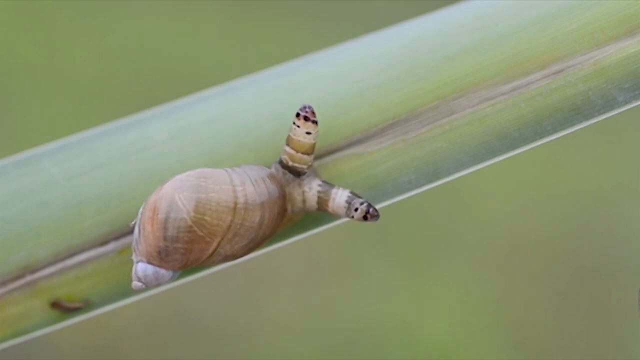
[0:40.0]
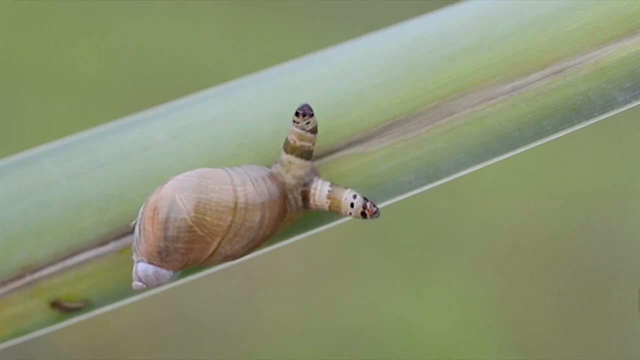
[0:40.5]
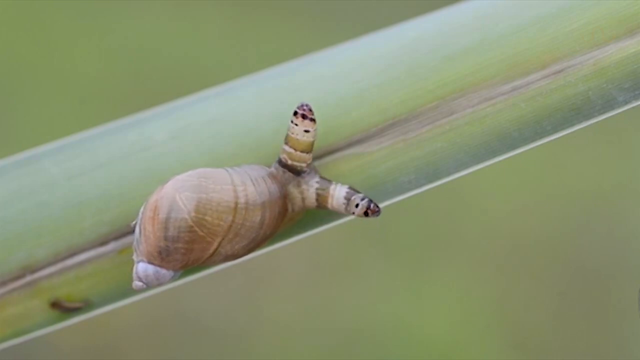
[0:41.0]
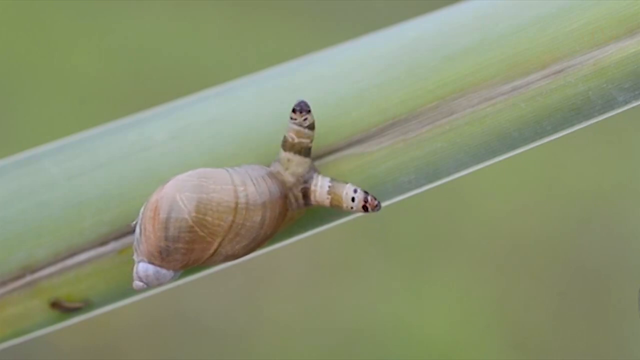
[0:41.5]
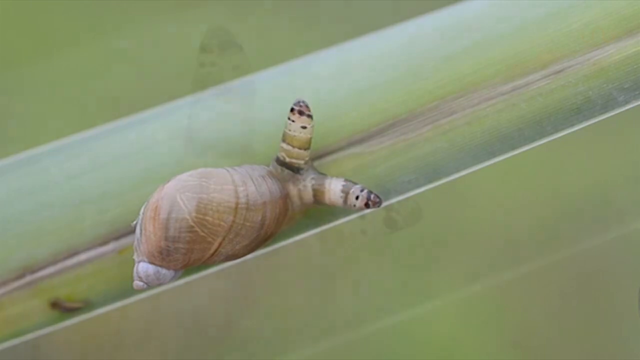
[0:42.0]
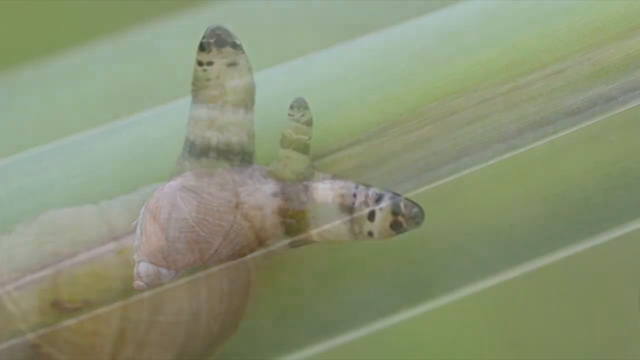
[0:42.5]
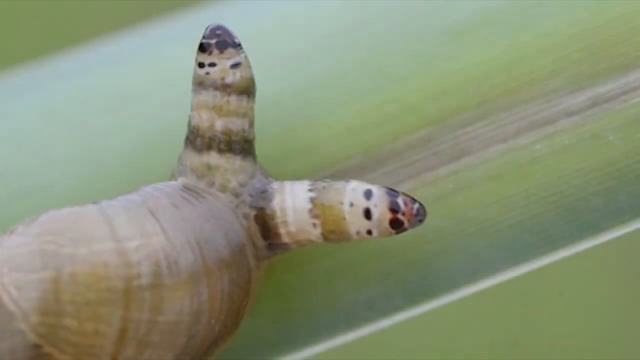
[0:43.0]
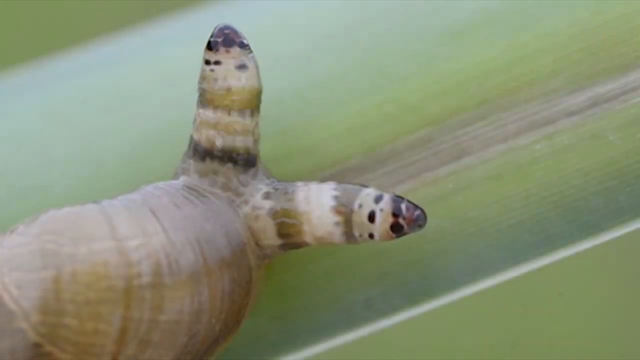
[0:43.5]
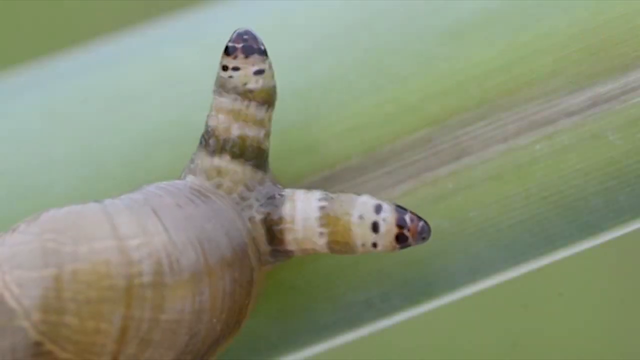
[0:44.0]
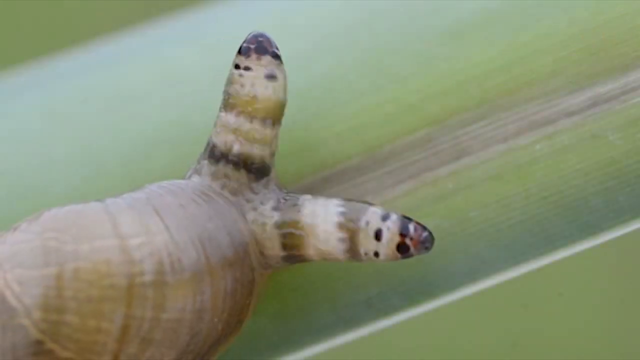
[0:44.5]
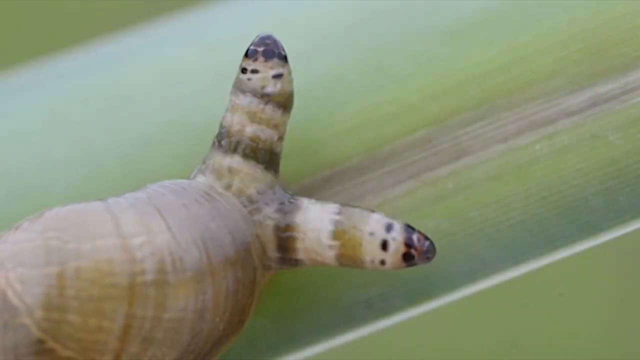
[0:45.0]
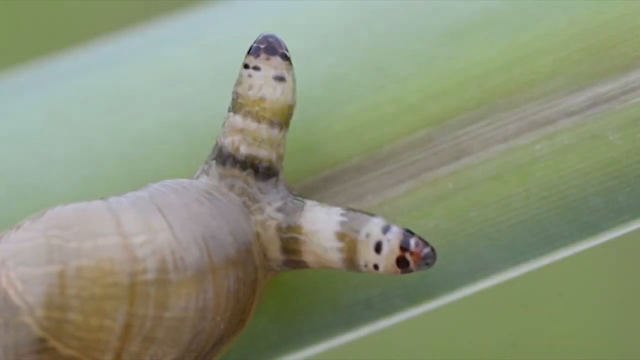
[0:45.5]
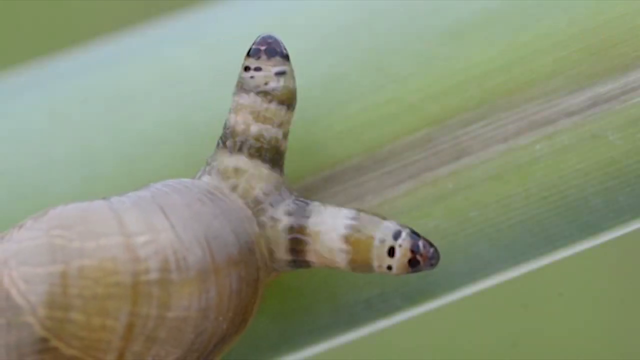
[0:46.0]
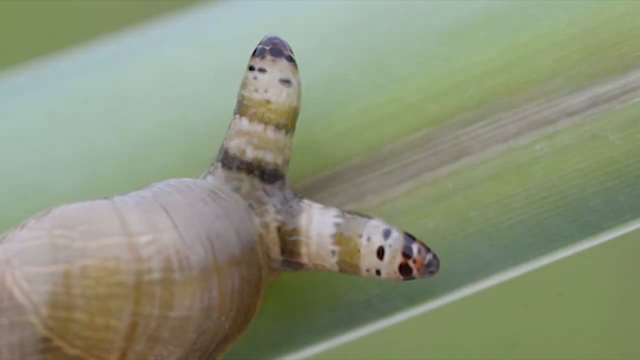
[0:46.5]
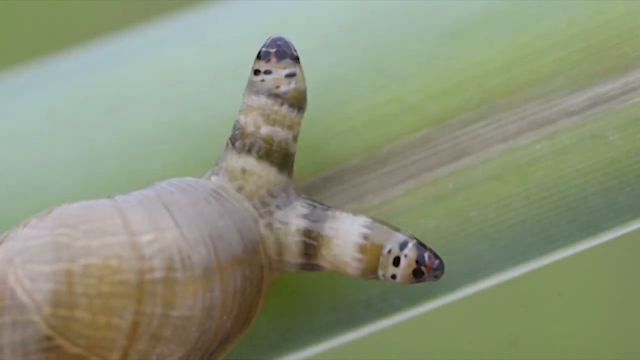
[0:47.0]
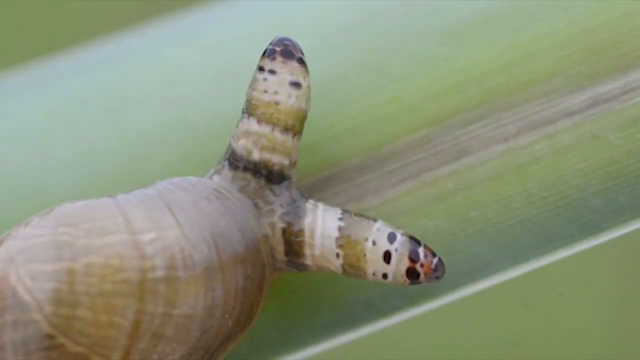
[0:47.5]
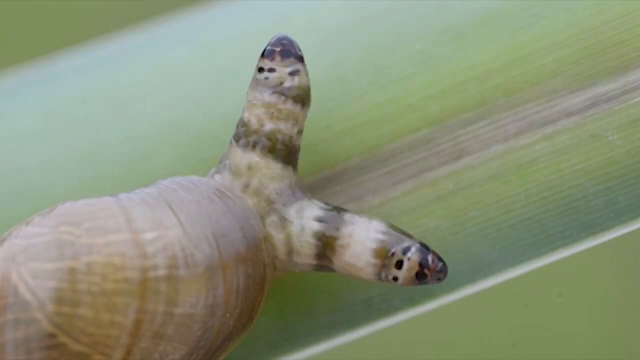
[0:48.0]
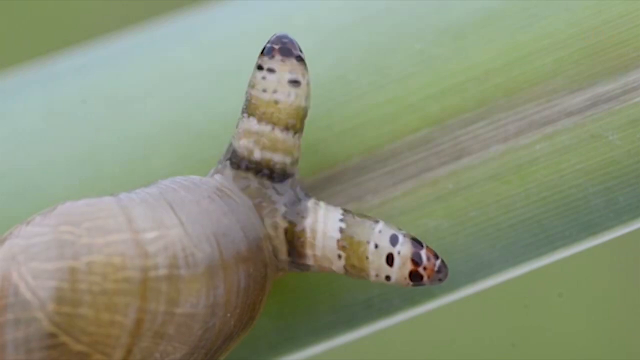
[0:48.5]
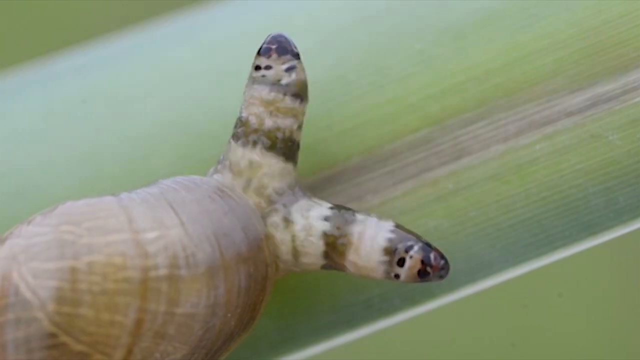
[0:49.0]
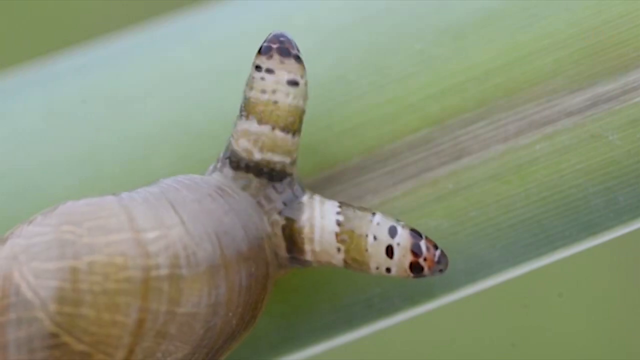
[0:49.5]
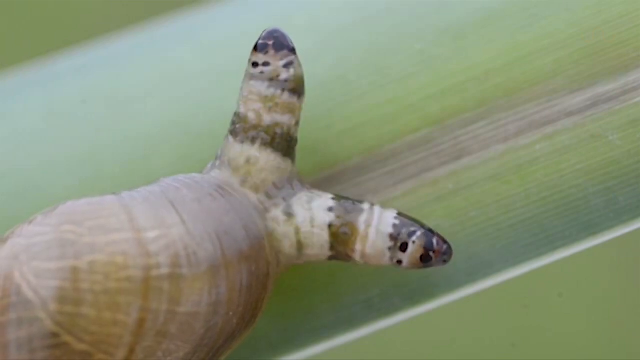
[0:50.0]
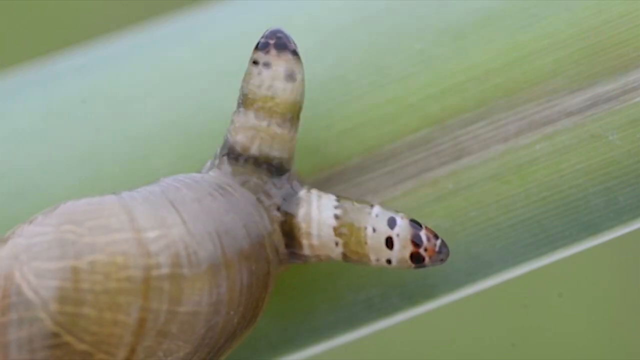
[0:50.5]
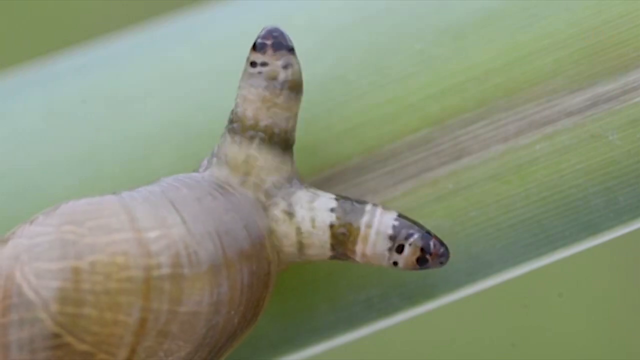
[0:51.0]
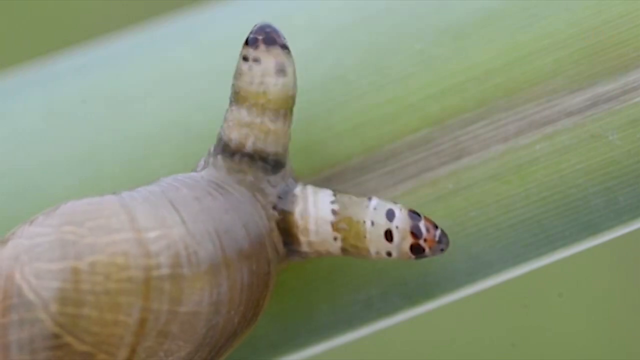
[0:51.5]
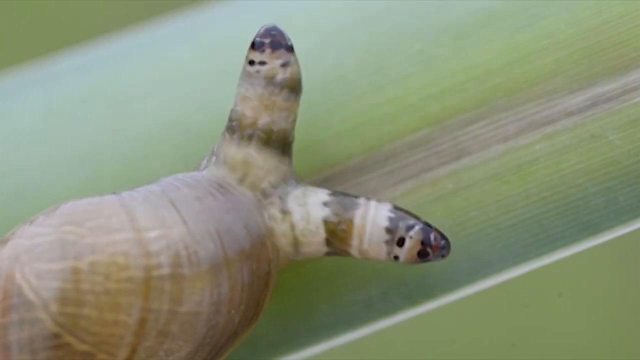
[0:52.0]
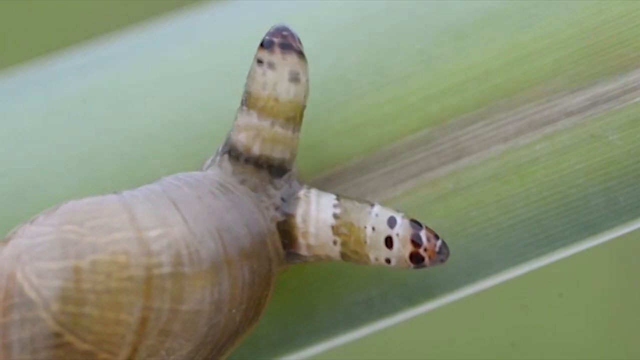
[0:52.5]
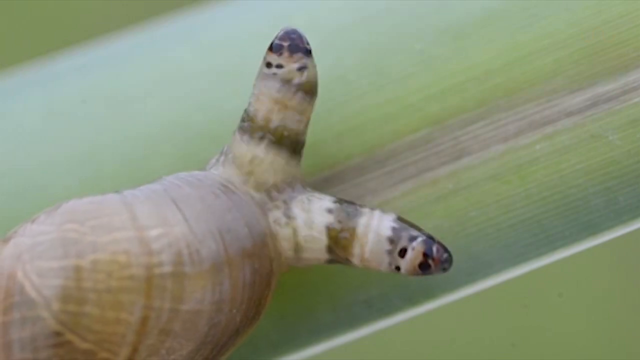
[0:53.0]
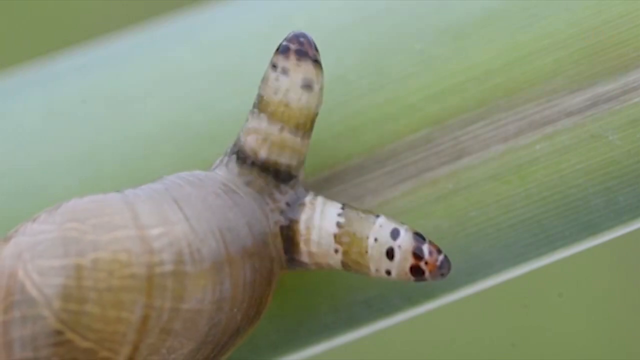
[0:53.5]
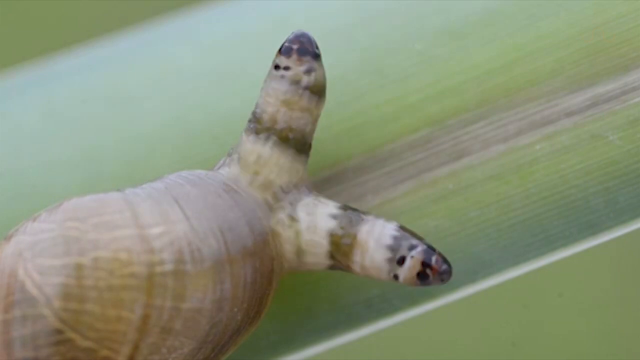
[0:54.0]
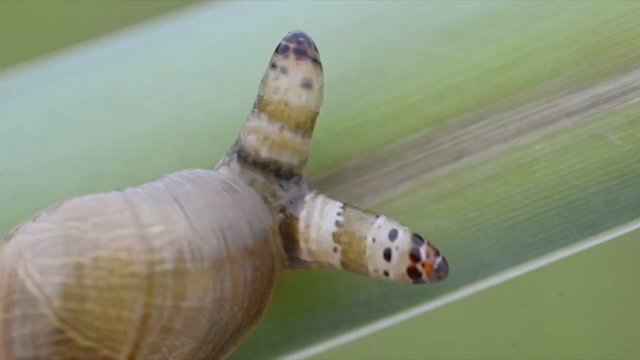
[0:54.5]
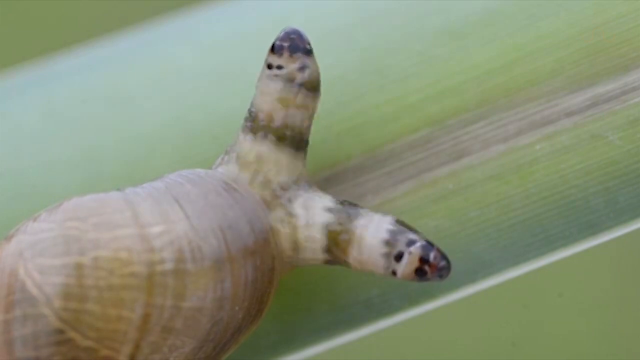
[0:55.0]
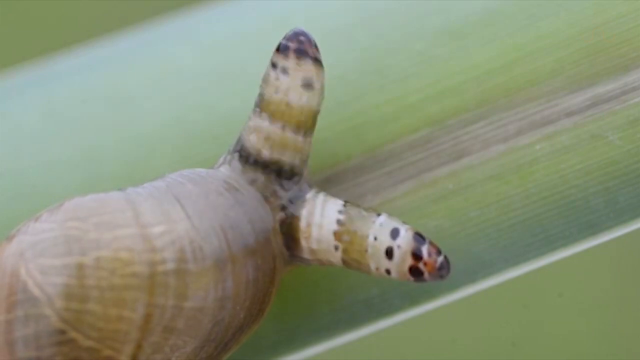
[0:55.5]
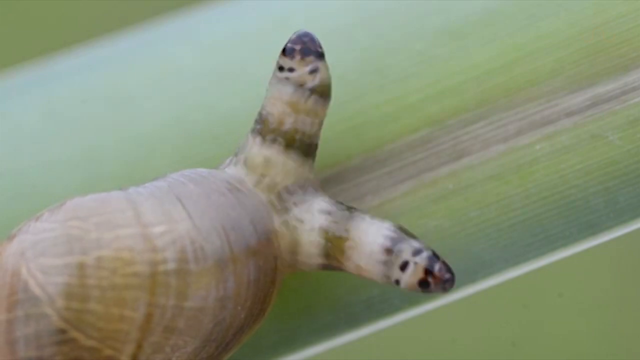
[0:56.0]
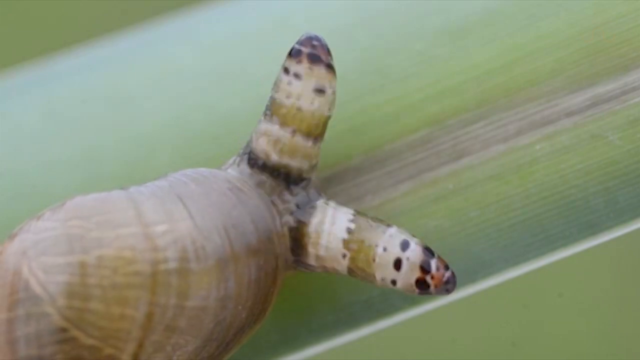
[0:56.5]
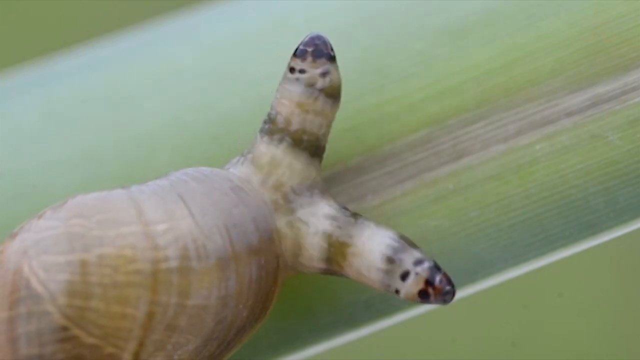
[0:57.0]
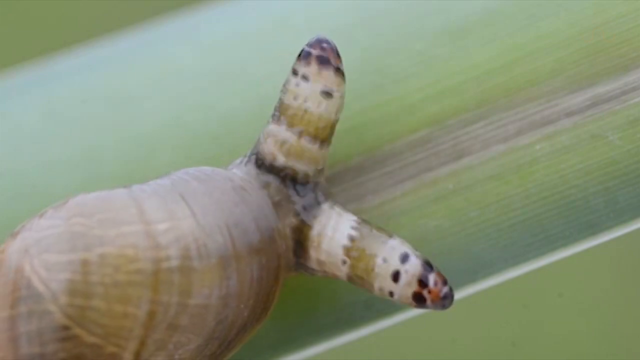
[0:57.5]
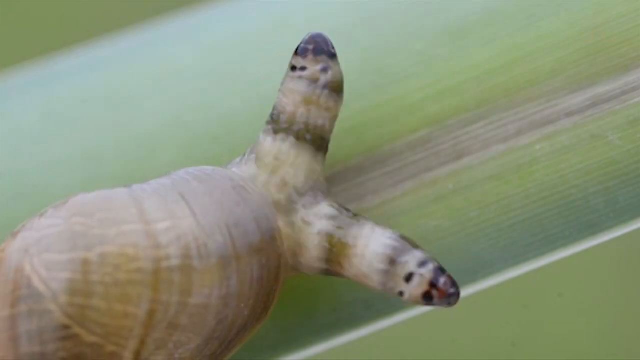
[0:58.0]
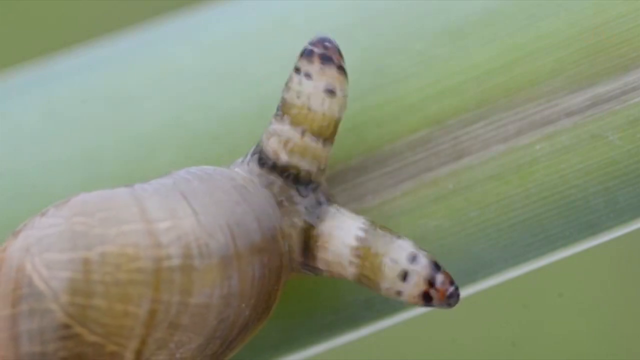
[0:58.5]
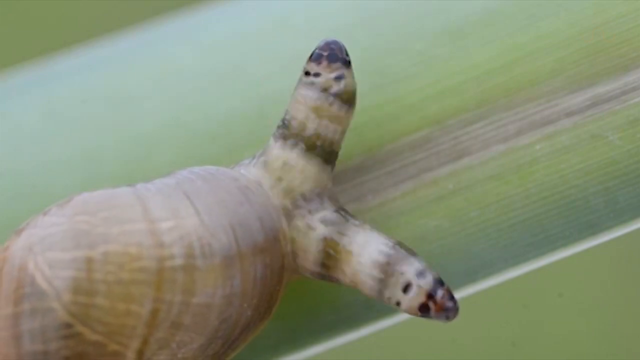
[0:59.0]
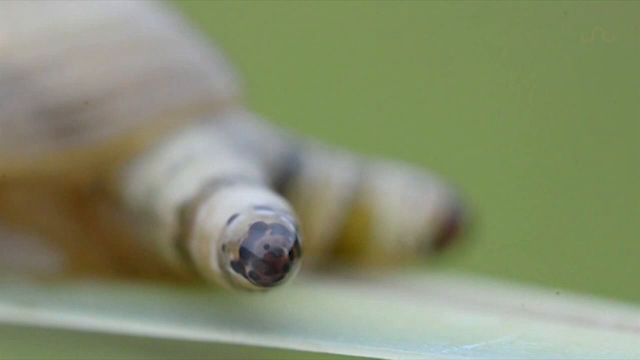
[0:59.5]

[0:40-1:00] A snail-like creature is on a branch or leaf of a plant that is green with what looks like a white slit down it. The antennae at the top keep moving up and down, and as they move, the striped pattern around them morphs: when they go up the colors look more white, and when they come down they show different striped patterns. The body hardly moves at all; mainly just the two antennae move, one to the left and one to the right. Right at the end, the camera zooms in on just the antennae.